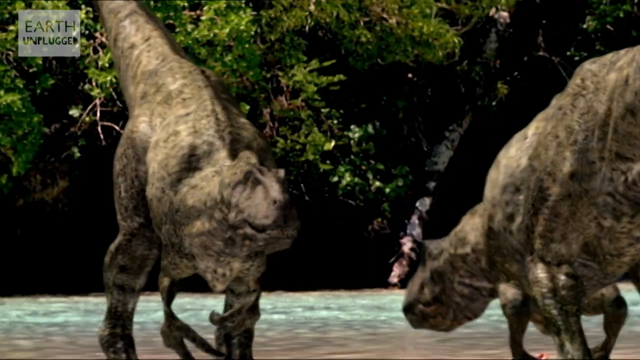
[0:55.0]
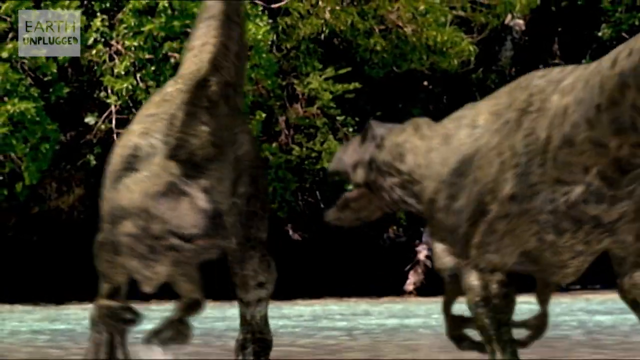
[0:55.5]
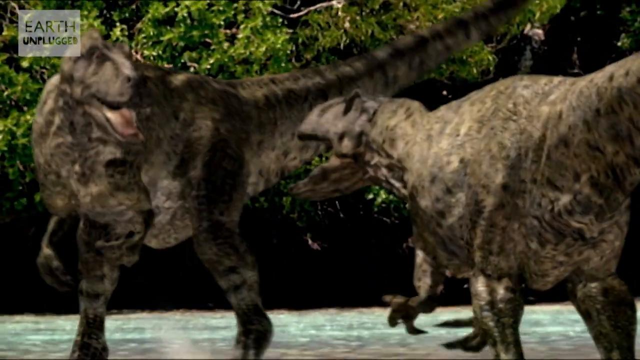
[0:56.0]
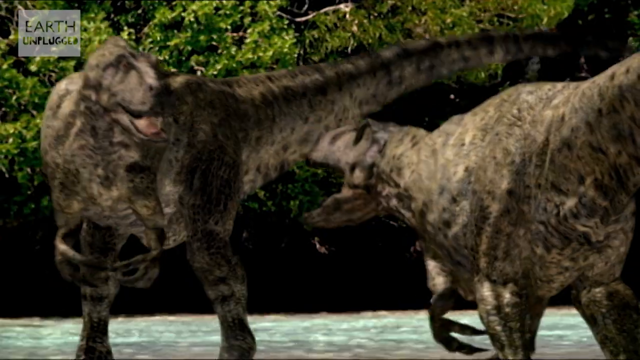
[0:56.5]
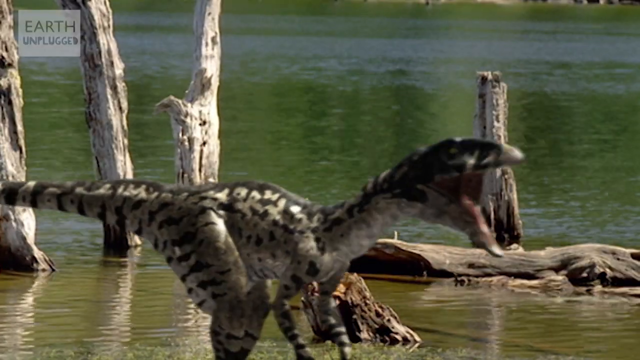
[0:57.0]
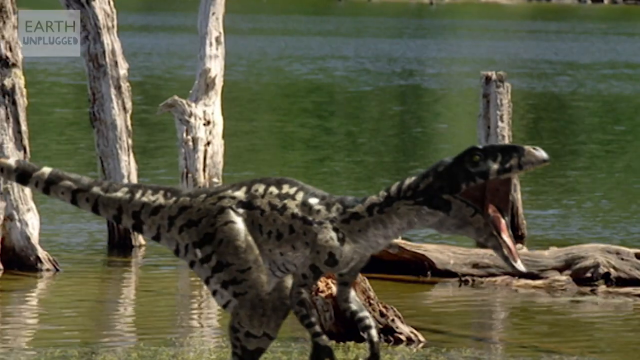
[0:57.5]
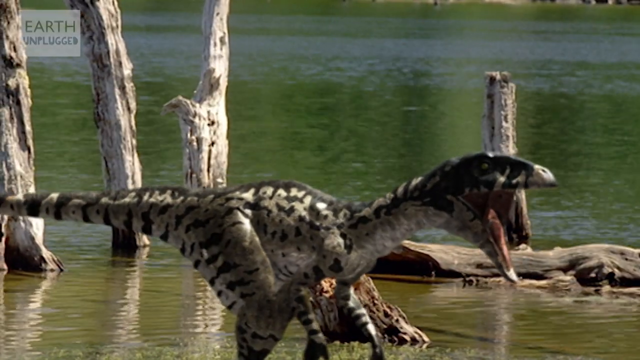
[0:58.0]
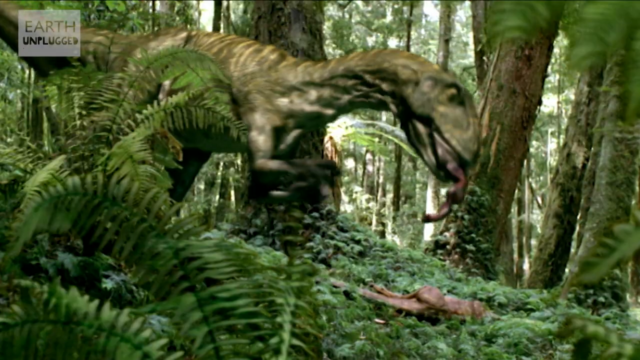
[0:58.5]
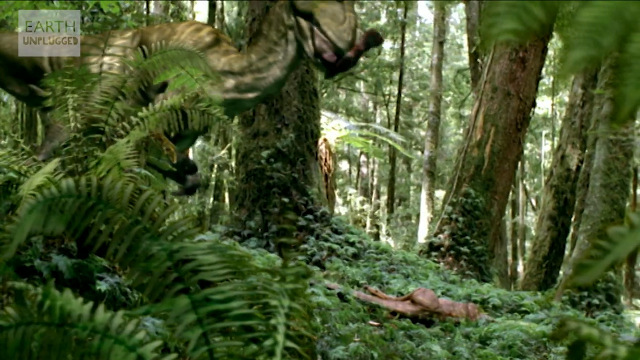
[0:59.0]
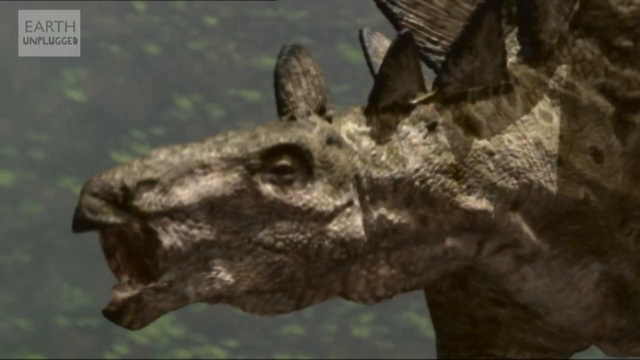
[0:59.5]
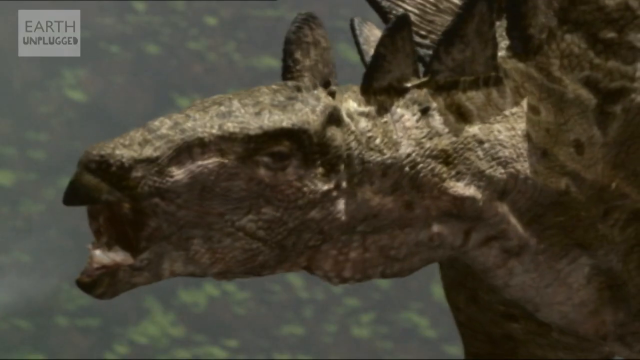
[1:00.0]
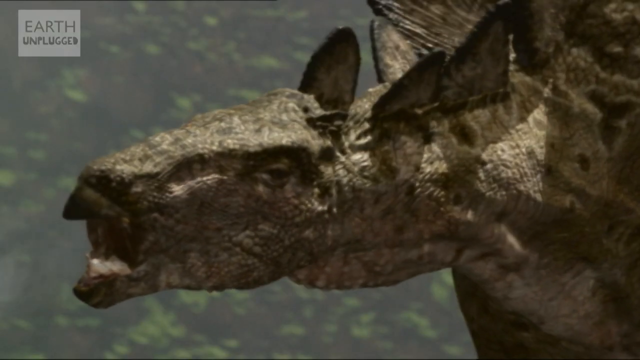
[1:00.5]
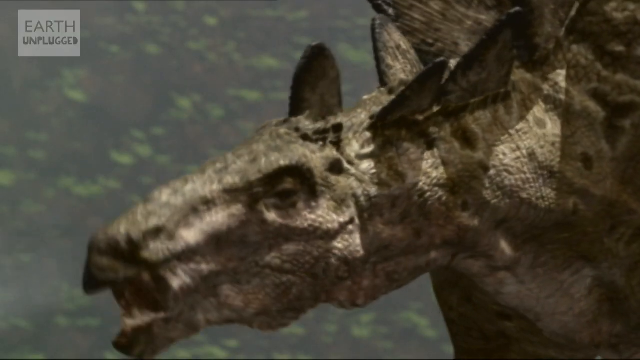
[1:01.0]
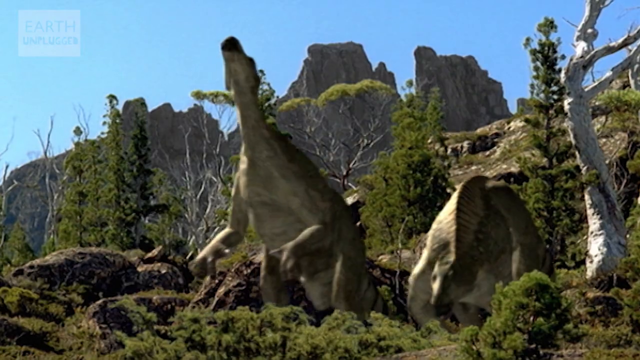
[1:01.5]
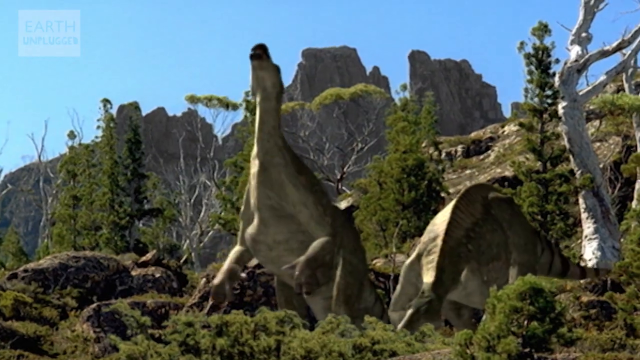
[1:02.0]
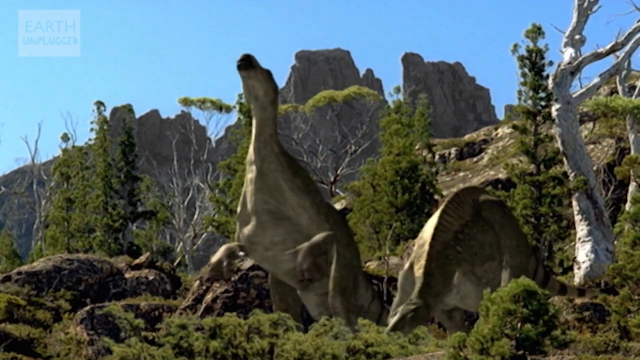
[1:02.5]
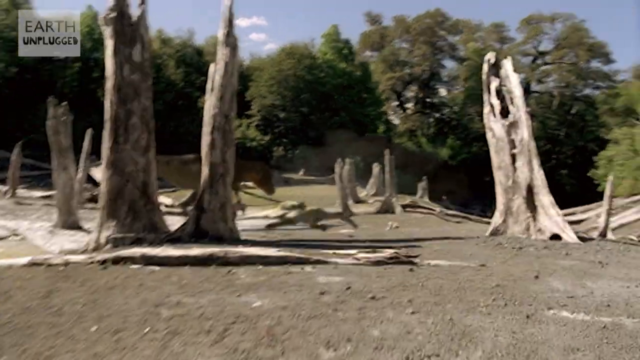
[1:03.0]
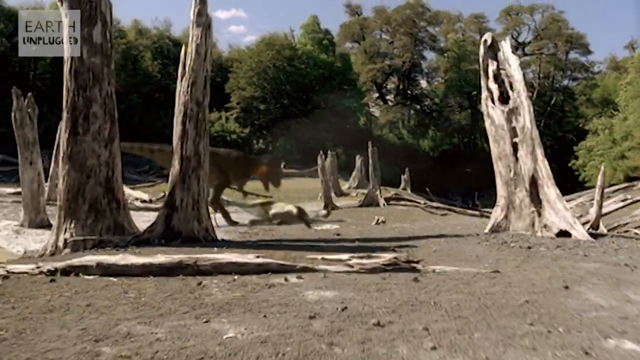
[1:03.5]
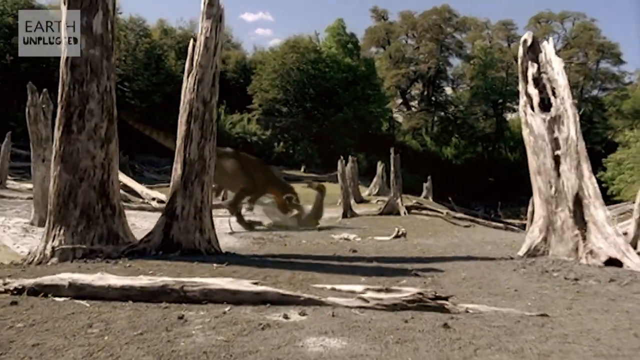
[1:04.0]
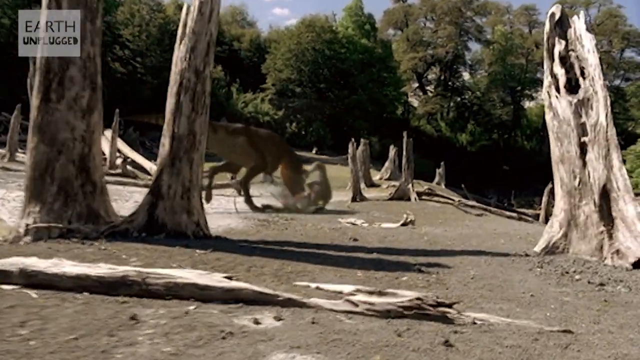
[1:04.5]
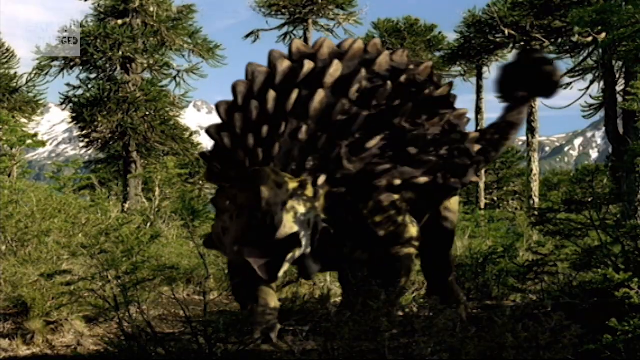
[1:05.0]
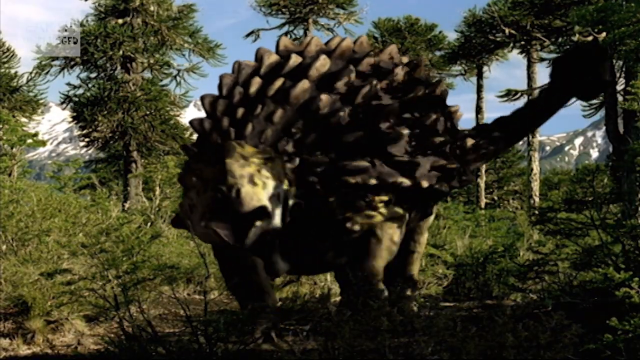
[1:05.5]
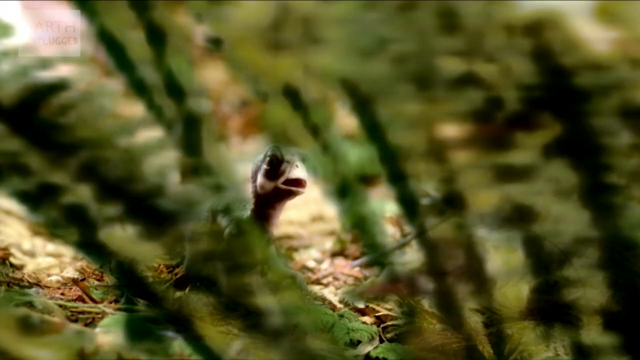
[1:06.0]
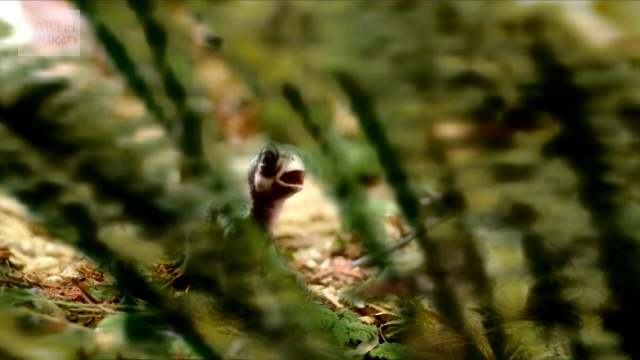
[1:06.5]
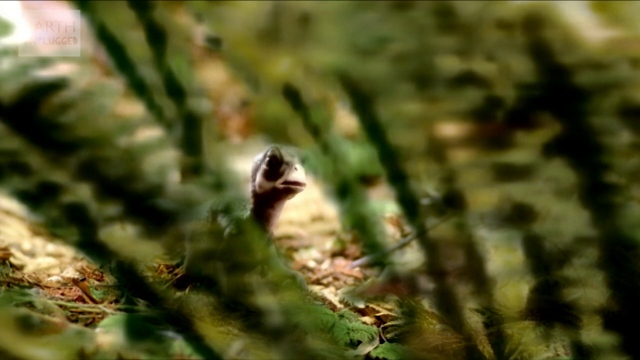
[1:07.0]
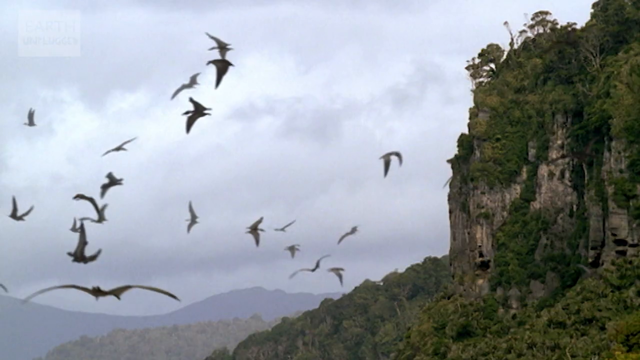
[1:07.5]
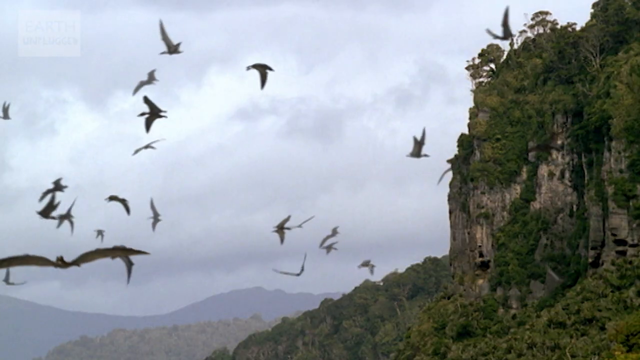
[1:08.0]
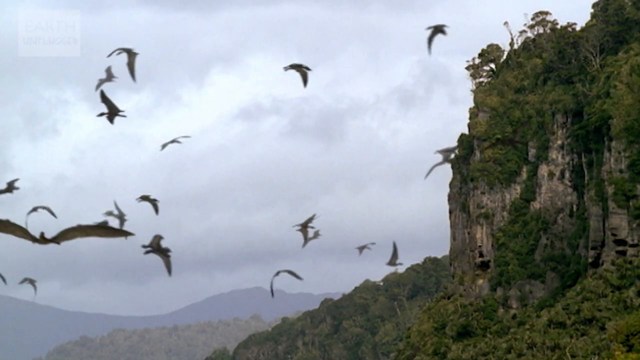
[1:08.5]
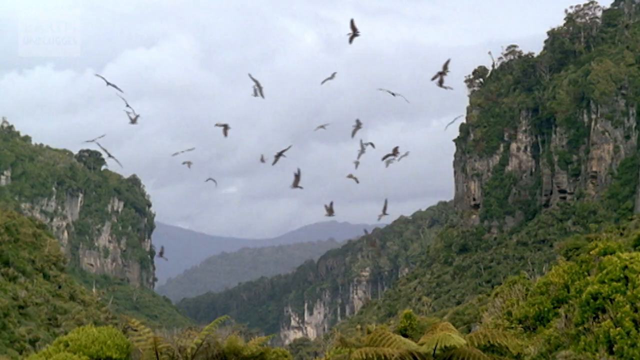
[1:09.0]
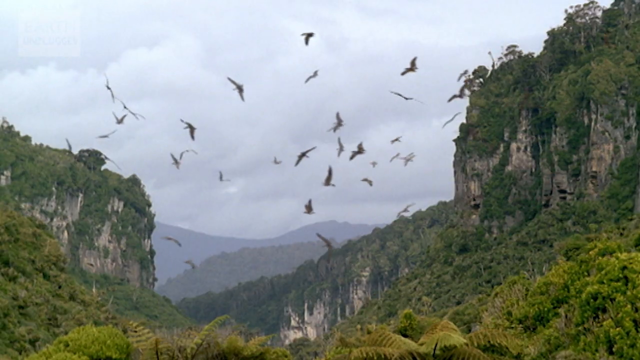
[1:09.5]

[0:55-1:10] Two dinosaurs are in a small body of water surrounded by trees and roar at each other, possibly territorially; one leans forward toward the other while it roars, and the other leans back and then roars. The Earth Unplugged logo is there. A smaller dinosaur roars at nothing visible in the scene. A dinosaur eats a piece of another dinosaur it had hunted and killed in the middle of the forest. A stegosaurus moves its head to the left. In a scene with two dinosaurs, one lifts its head up and starts roaring. A dinosaur on the ground, in a very barren wooded area where trees look like they have fallen or been cut down, struggles as it is attacked by a much bigger dinosaur, which bites it around the stomach area. A stegosaurus walks through the forested area, opening its mouth with its tail wagging. A small dinosaur, probably a baby pterodactyl, opens its mouth. Then a big group of 20 or more pterodactyls flies on a hillside.